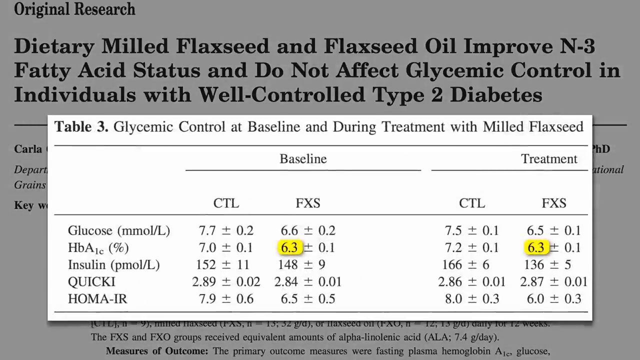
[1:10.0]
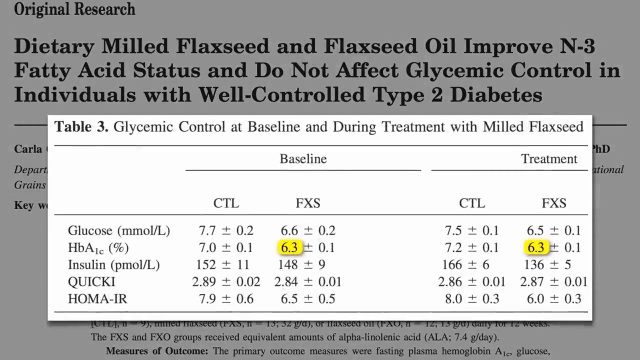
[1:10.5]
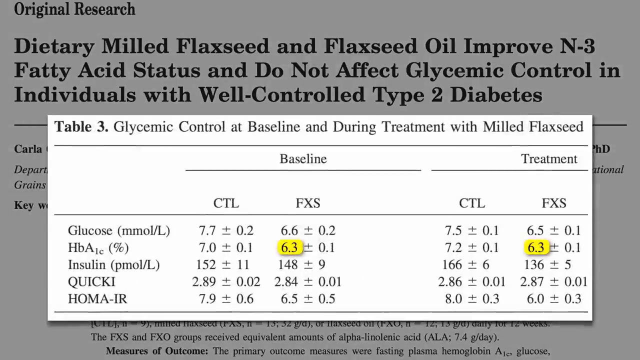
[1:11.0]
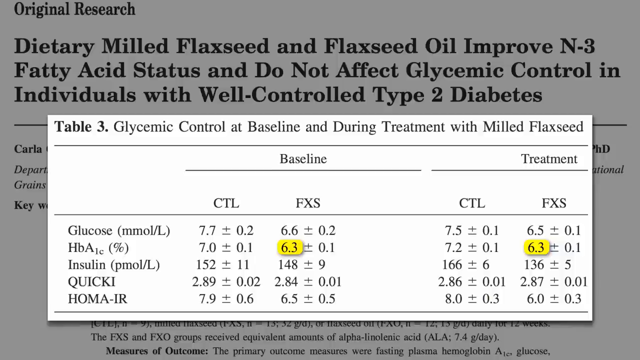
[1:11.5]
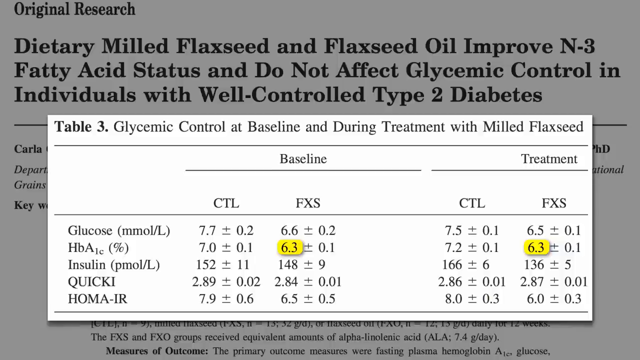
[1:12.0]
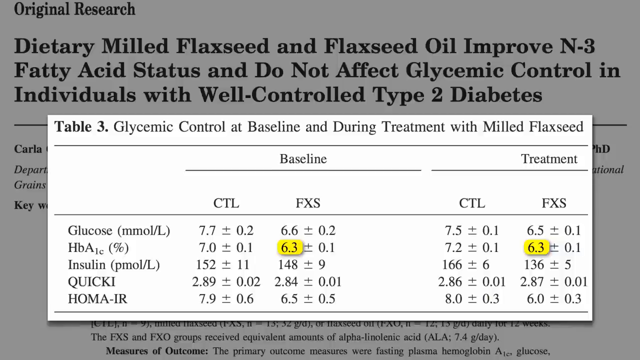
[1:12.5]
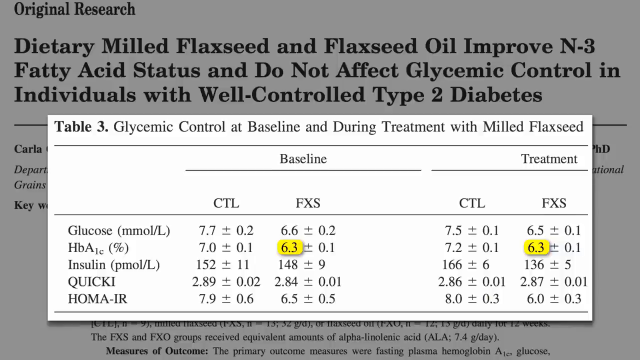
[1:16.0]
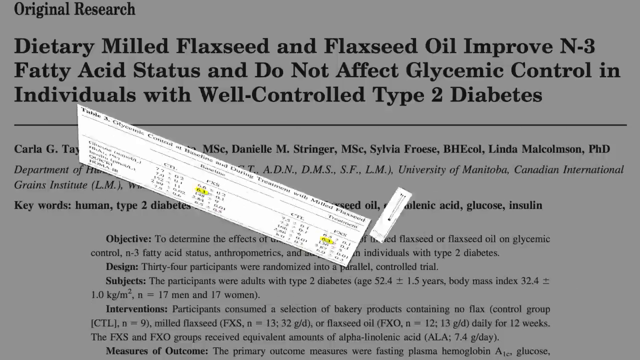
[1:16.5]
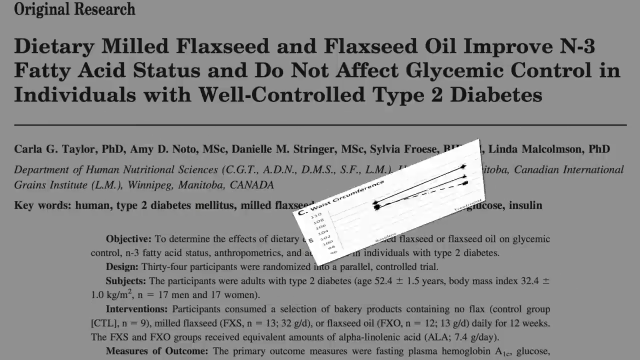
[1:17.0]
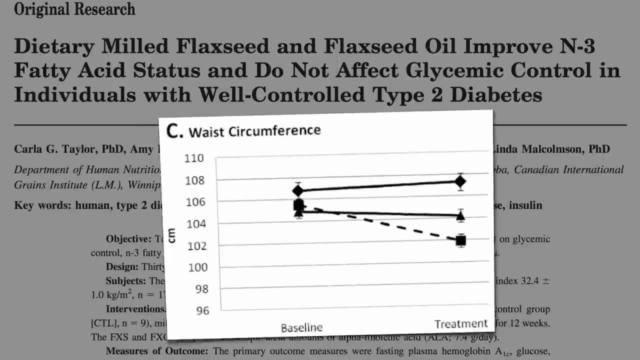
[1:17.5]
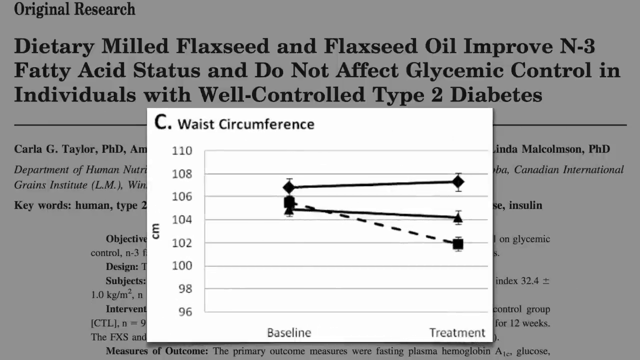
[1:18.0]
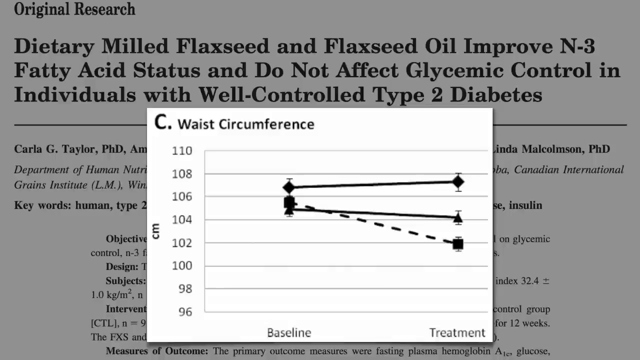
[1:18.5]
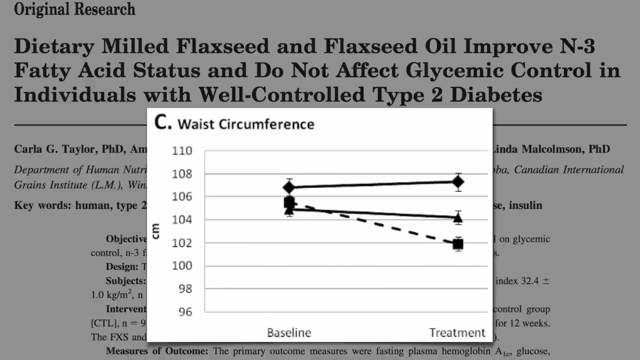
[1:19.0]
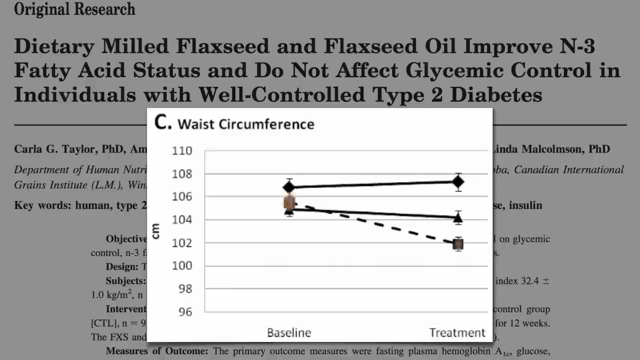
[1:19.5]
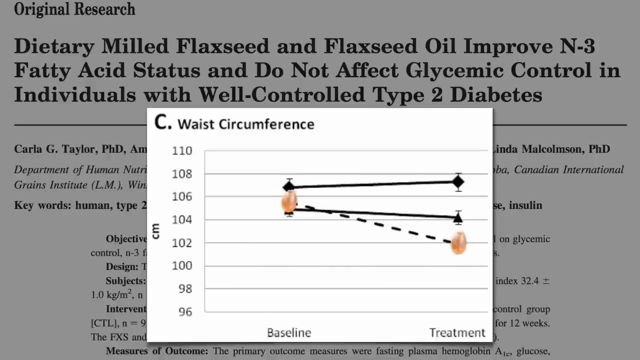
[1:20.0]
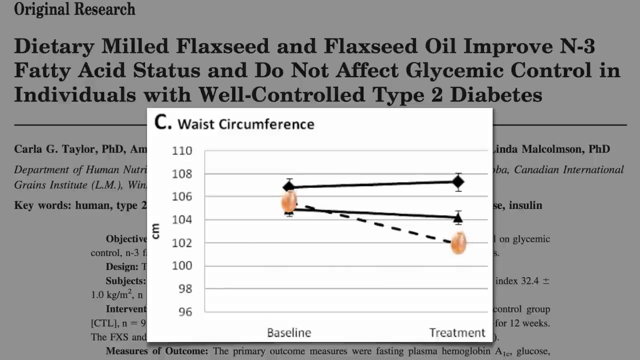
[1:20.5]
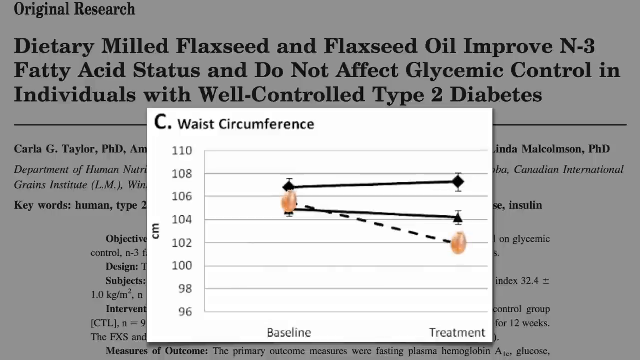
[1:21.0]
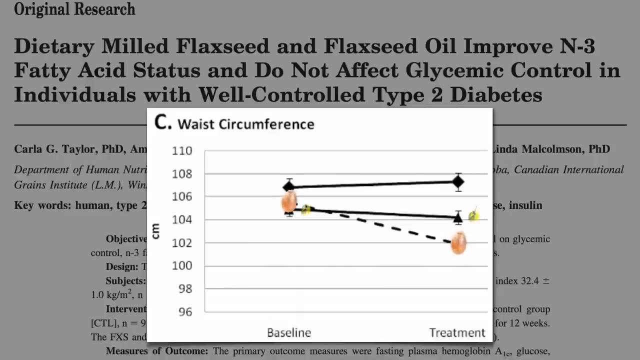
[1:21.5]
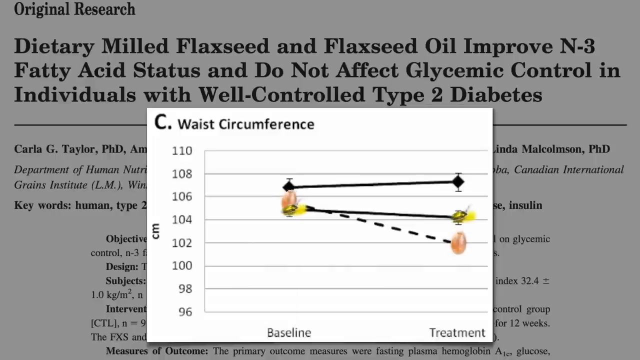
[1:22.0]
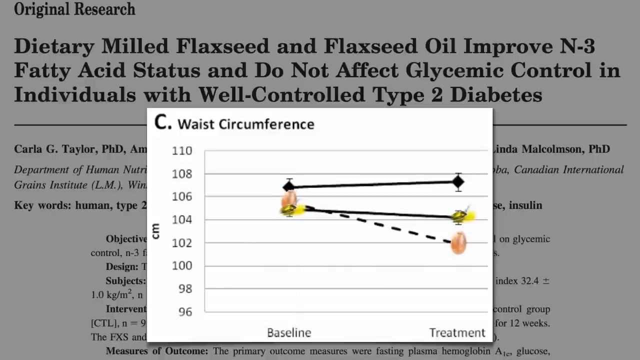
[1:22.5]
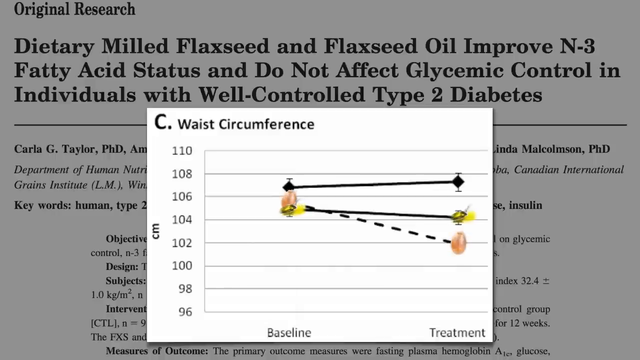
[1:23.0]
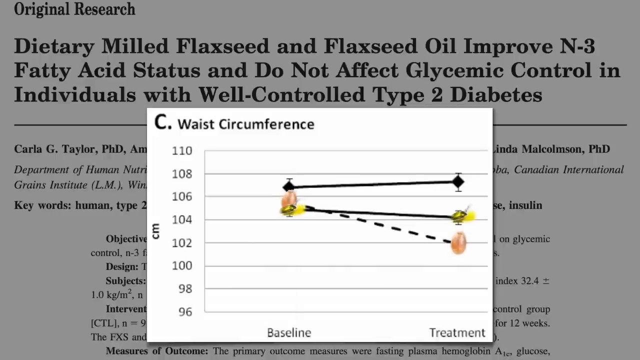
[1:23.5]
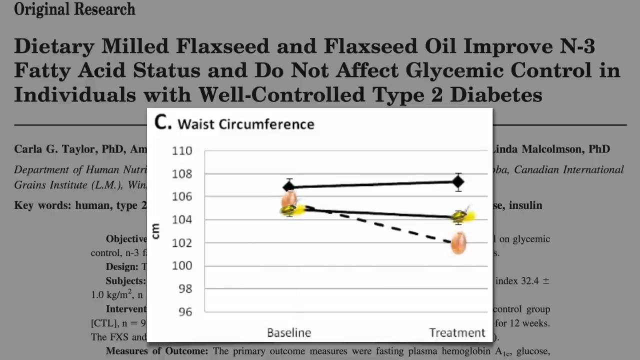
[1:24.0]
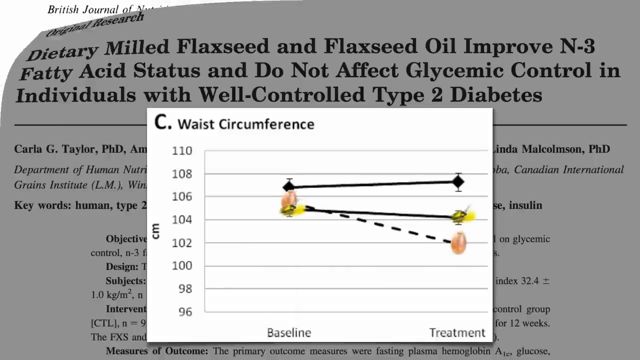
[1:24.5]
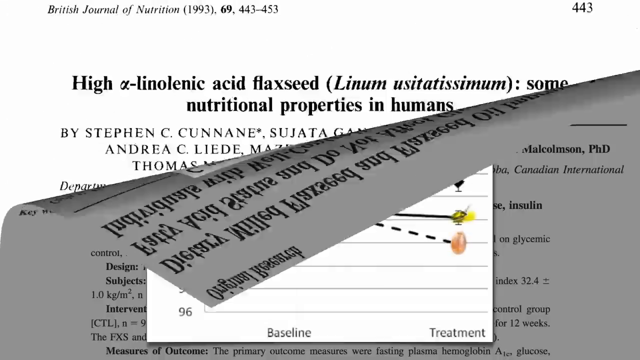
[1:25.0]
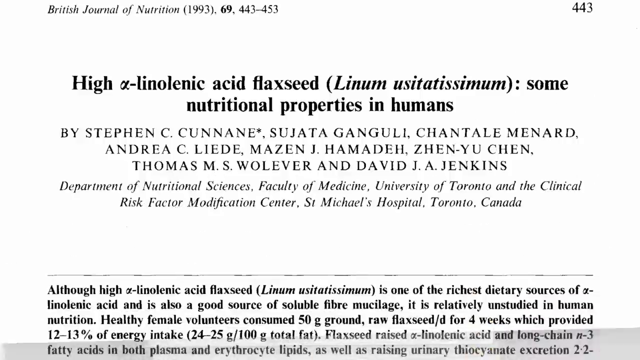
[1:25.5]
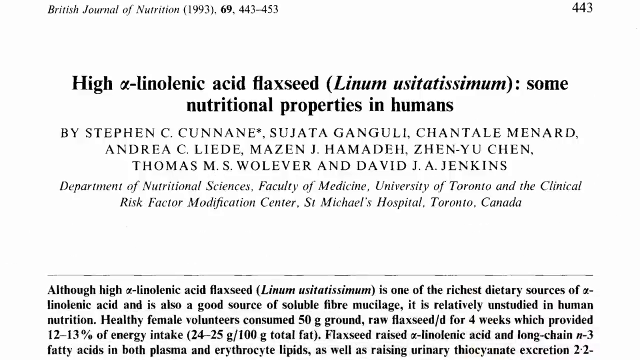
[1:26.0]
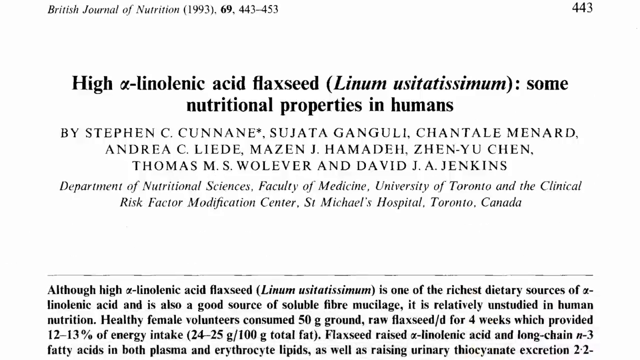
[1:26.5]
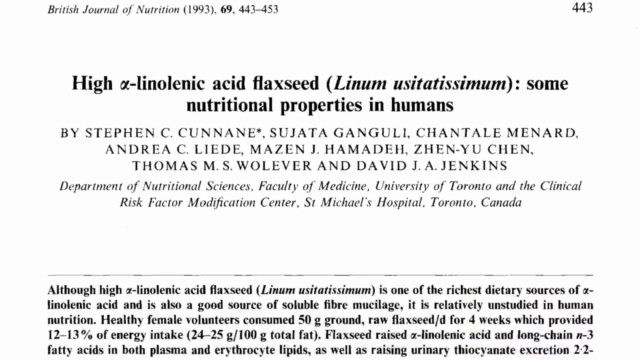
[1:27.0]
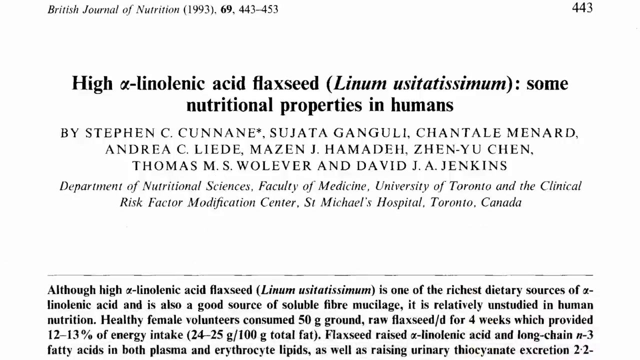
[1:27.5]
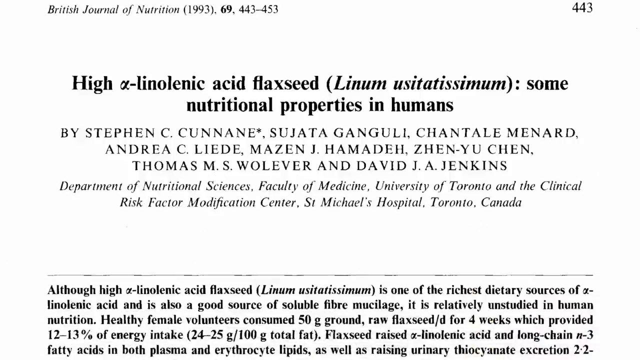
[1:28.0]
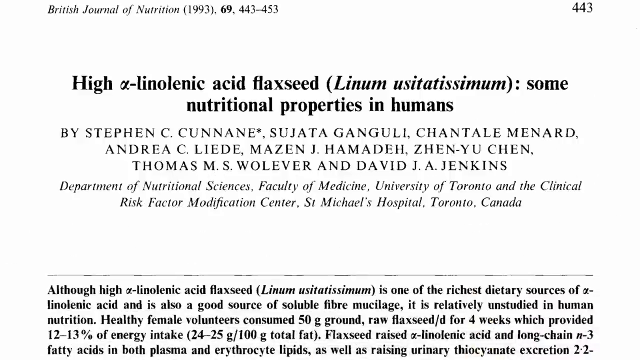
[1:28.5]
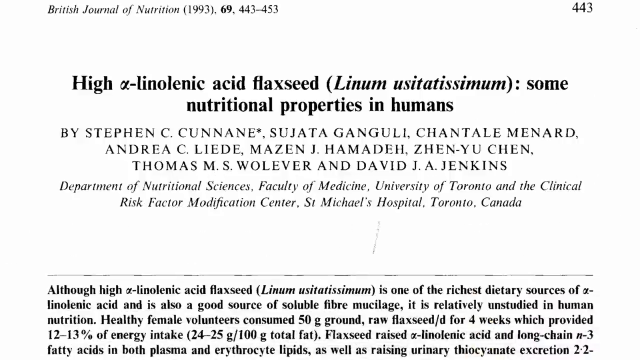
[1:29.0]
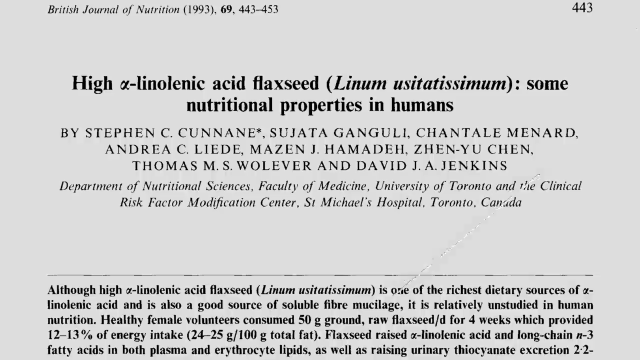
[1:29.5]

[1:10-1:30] A table taken from the article behind it is on screen. The article behind it reads "dietary mulled flaxseed and flaxseed oil improve N3 fatty acid status and do not affect glycemic control in individuals with well control type 2 diabetes". The table excerpt reads "table 3 glycemic control at baseline and during treatment with mulled flaxseed" and gives baseline ranges and treatment ranges for glucose, HbA1c, insulin, something called quick key, and HOMA-IR. The table cuts away and is replaced by a graph of waist circumference, with a big letter C to the left of "waist circumference". The y-axis shows centimeters and the x-axis shows baseline and treatment, illustrating the difference between the baseline and treatment levels. The view then transitions to the article again, which reads "high alpha-linolenic acid flaxseed, some nutritional properties in humans".